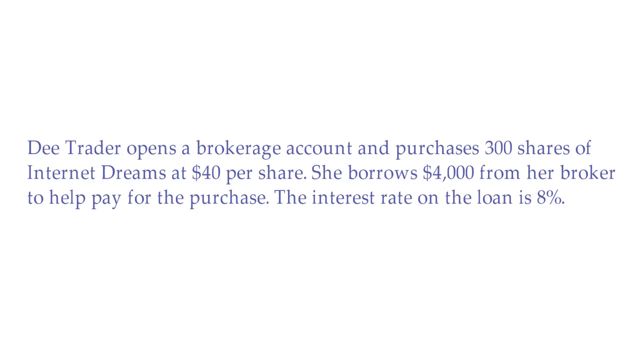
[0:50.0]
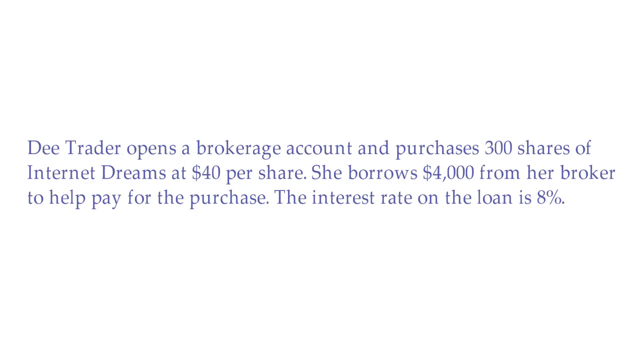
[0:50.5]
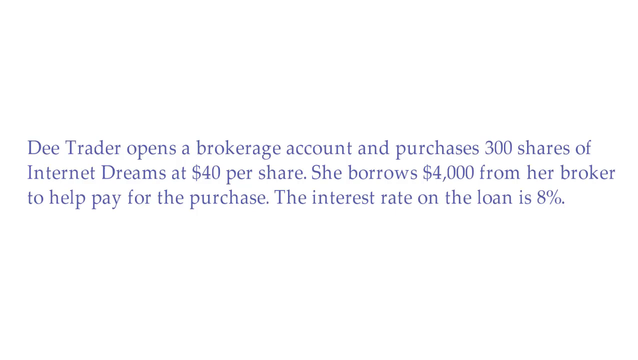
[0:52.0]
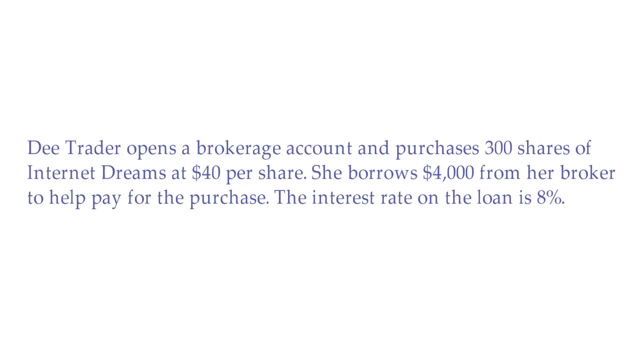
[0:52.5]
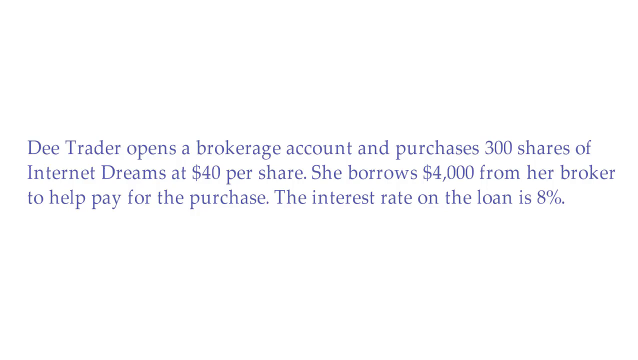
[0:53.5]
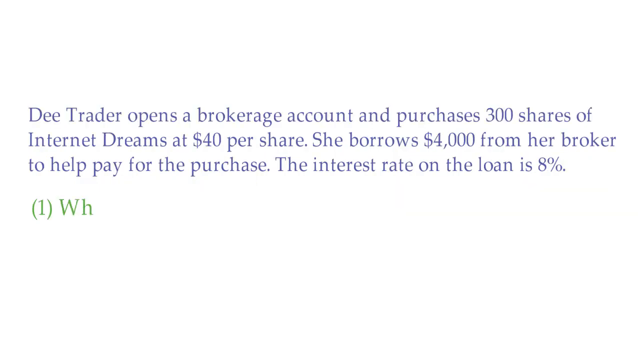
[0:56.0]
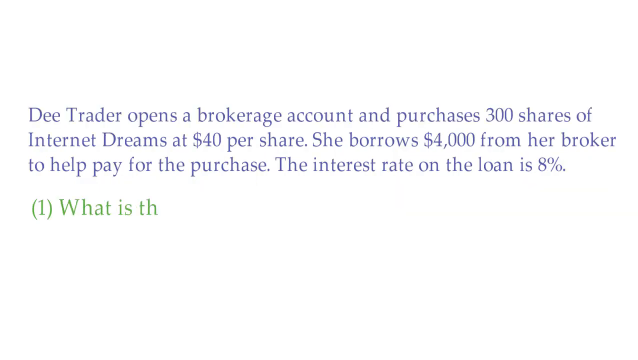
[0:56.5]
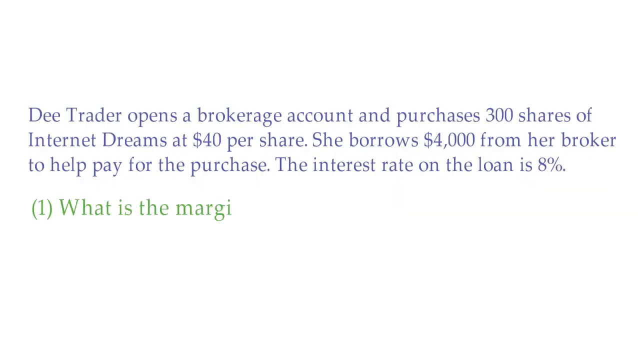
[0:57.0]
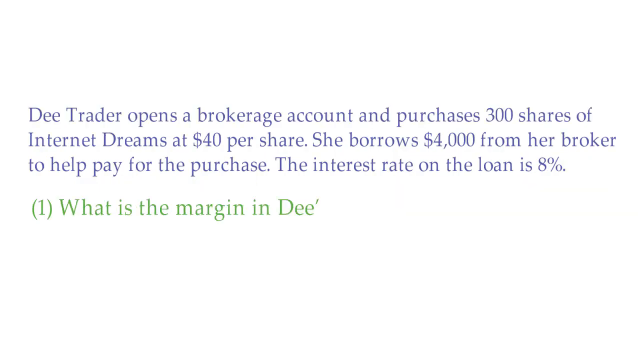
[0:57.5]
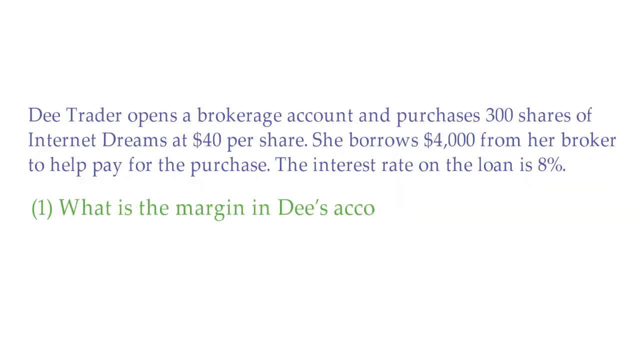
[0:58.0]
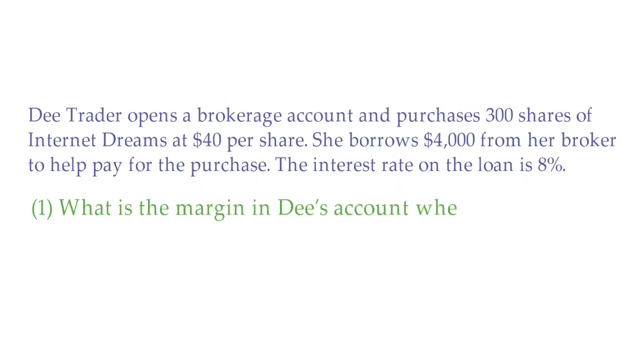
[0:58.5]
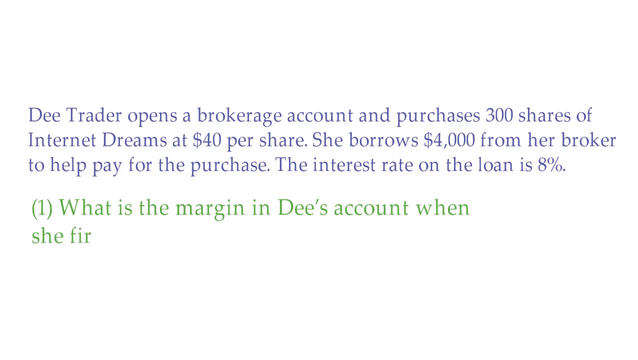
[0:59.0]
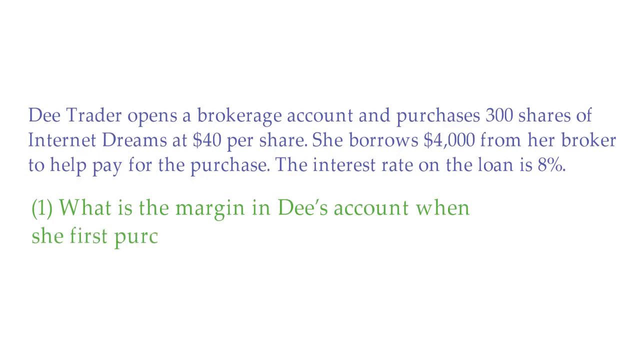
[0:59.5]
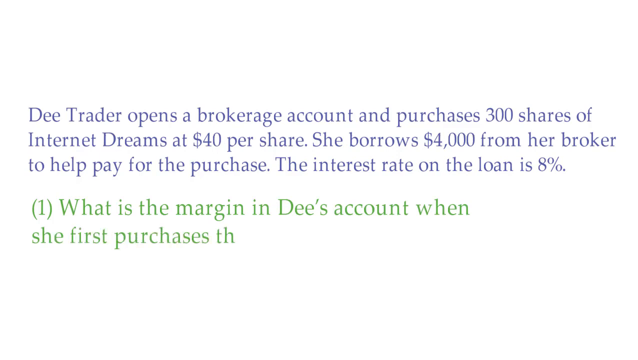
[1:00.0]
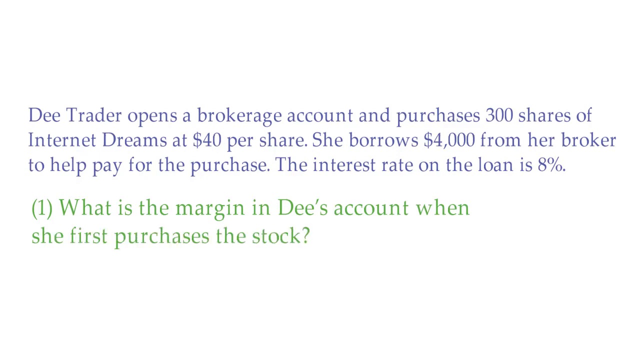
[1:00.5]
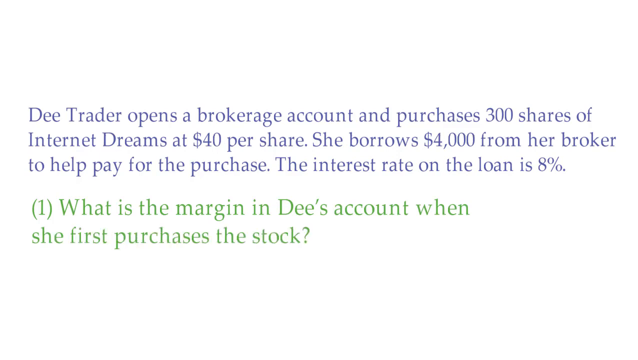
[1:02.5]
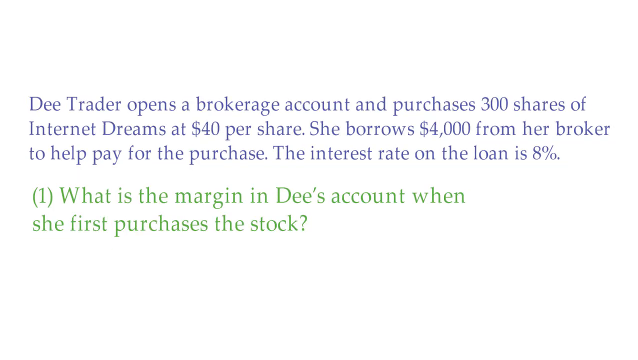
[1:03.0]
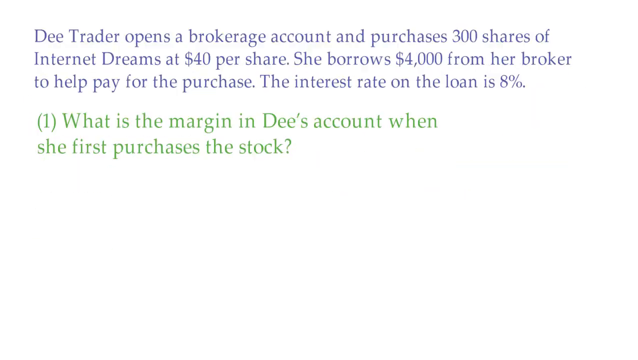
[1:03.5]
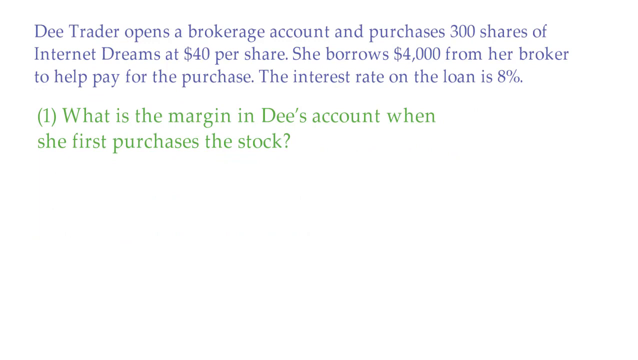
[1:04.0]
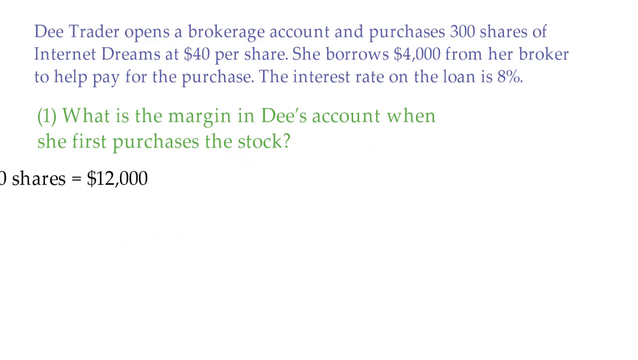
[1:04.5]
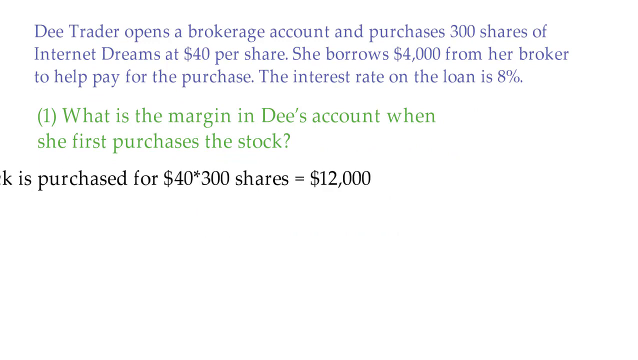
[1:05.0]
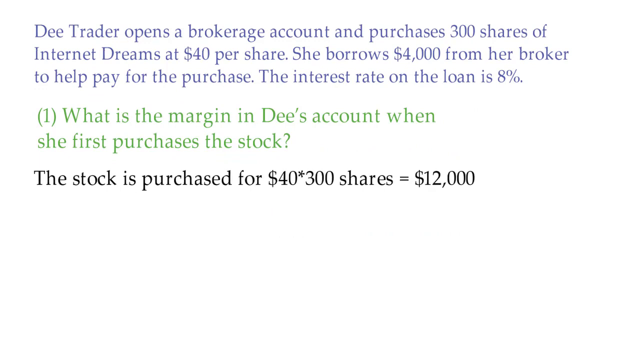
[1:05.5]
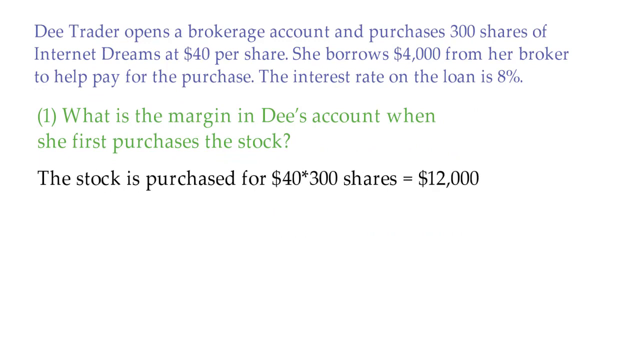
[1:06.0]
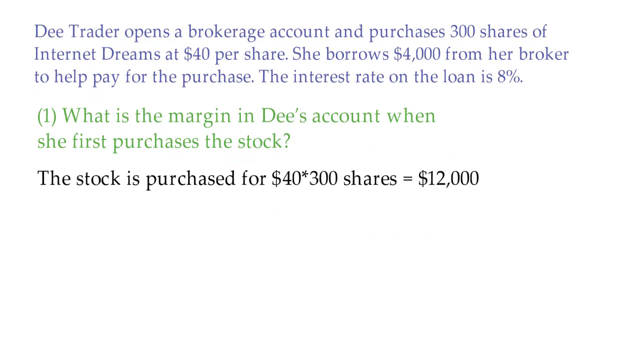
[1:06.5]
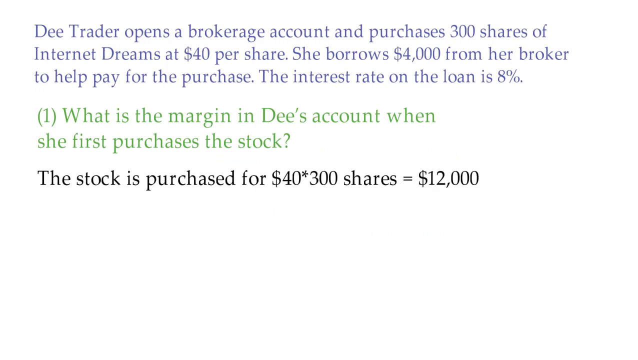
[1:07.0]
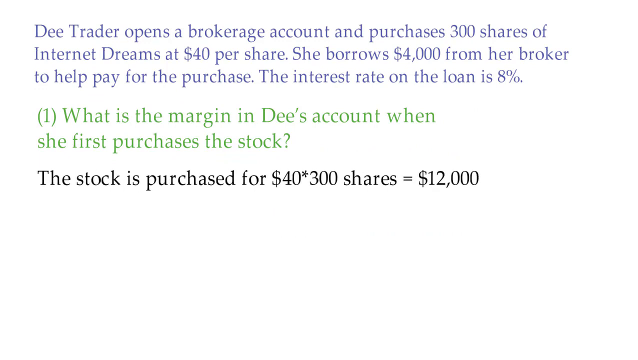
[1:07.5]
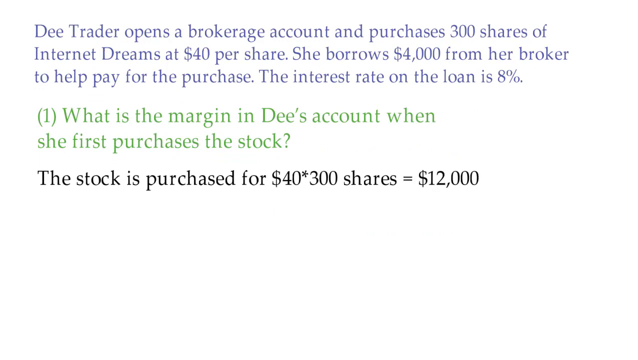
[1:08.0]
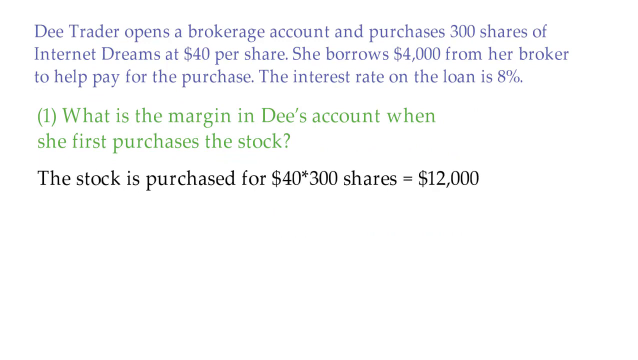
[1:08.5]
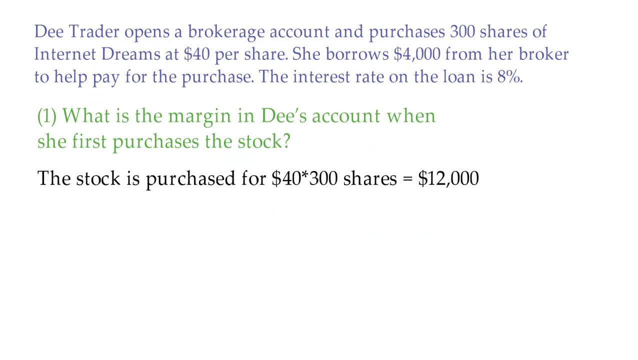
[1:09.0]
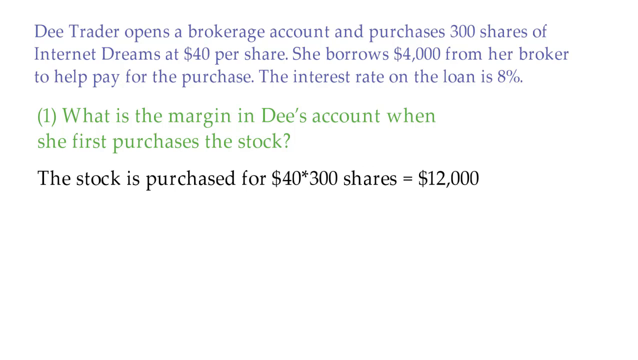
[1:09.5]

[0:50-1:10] The word problem remains on screen, and the video begins working through it. Immediately under the word problem, green text appears: "(1) What is the margin in Dee's account when she first purchases the stock?" An equation then pops up showing the stock purchased at $40 multiplied by 300 shares, equaling $12,000. The background is still white; the word problem is written in blue, the step in green, and the calculations in black.